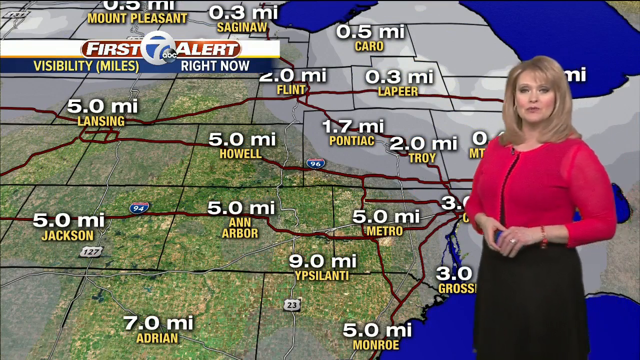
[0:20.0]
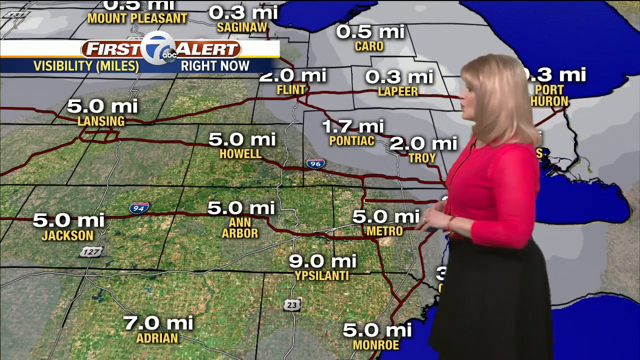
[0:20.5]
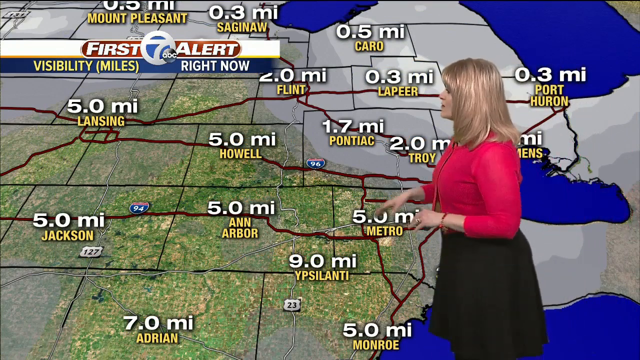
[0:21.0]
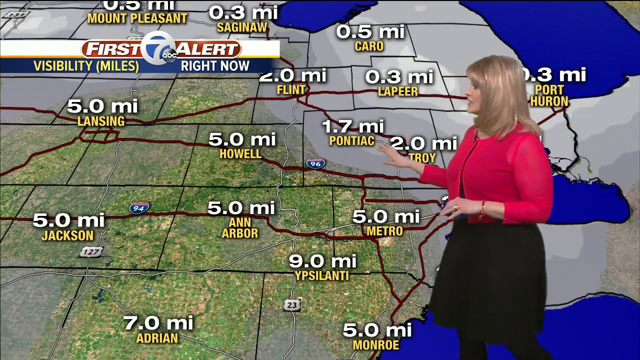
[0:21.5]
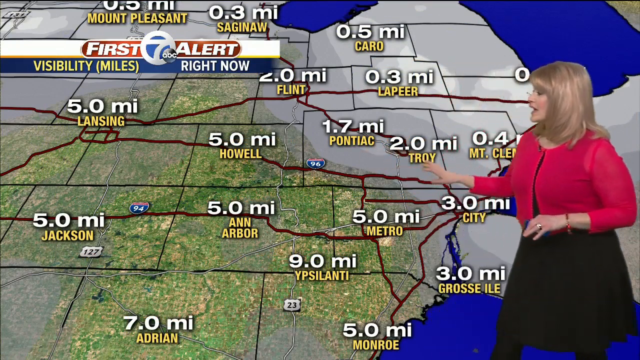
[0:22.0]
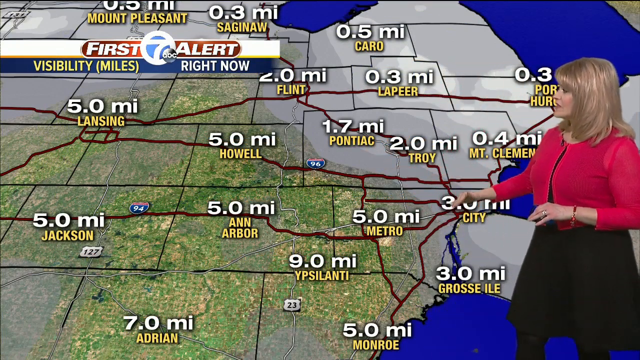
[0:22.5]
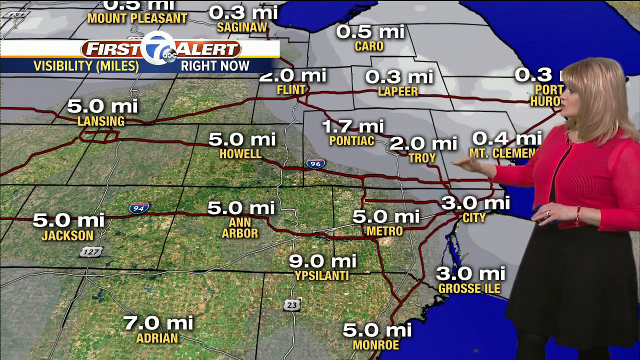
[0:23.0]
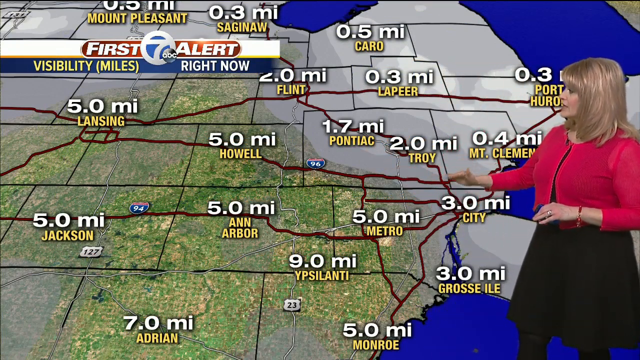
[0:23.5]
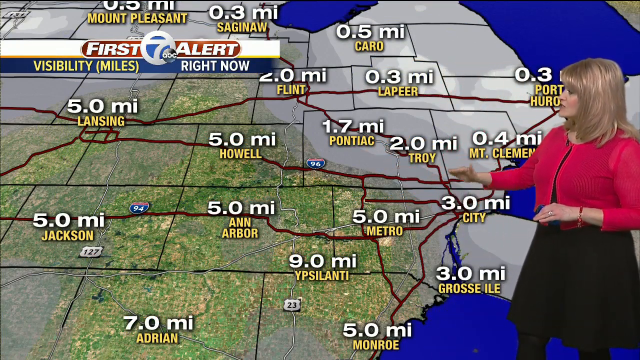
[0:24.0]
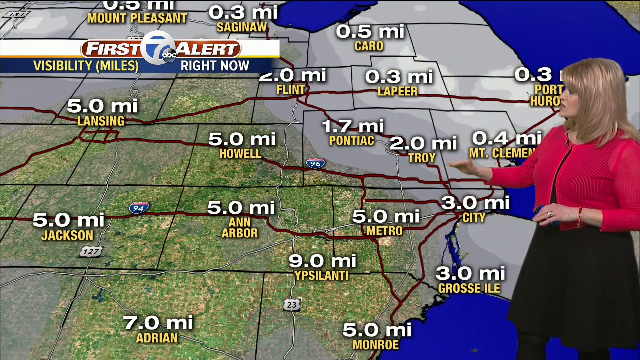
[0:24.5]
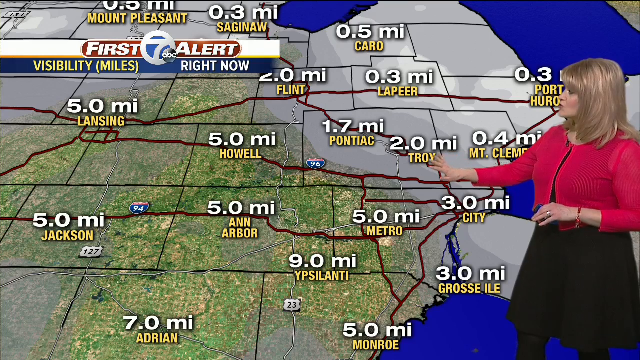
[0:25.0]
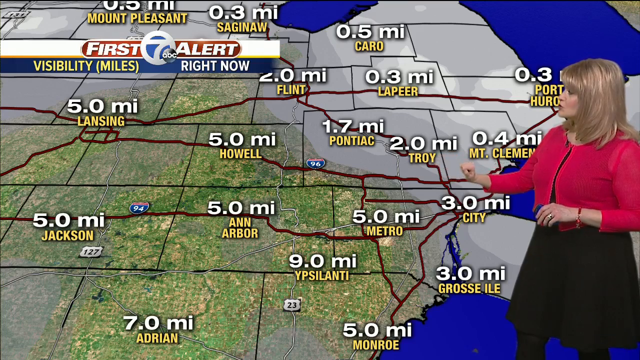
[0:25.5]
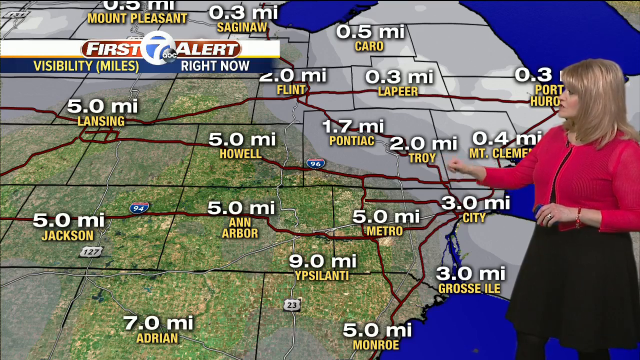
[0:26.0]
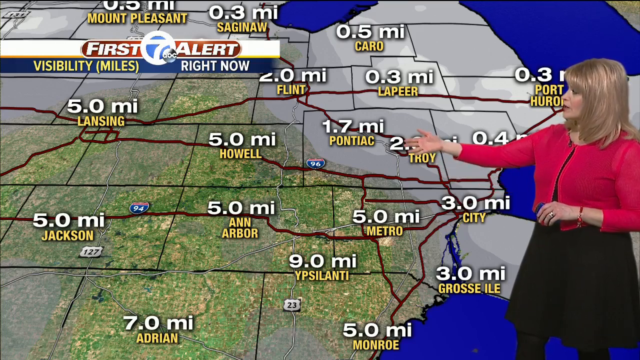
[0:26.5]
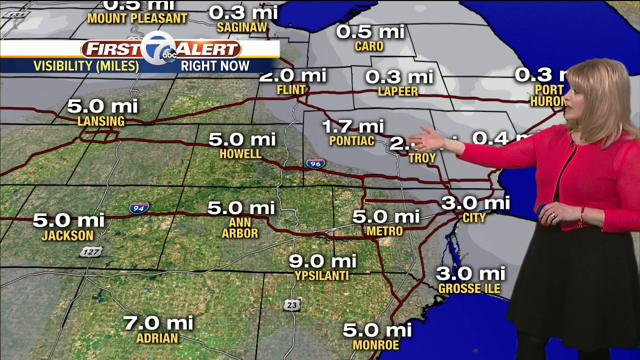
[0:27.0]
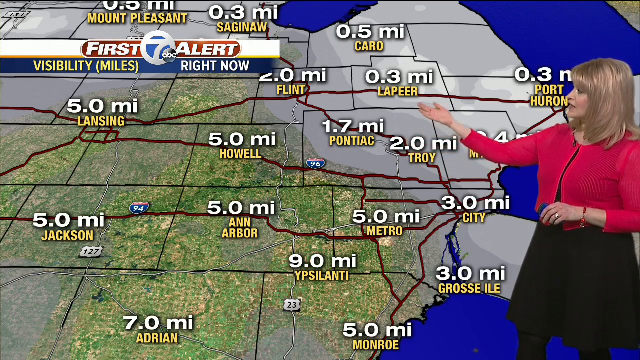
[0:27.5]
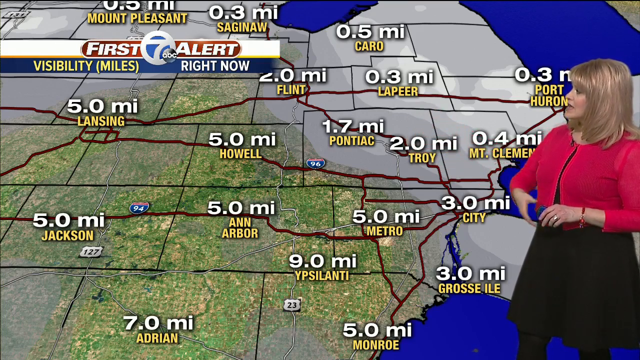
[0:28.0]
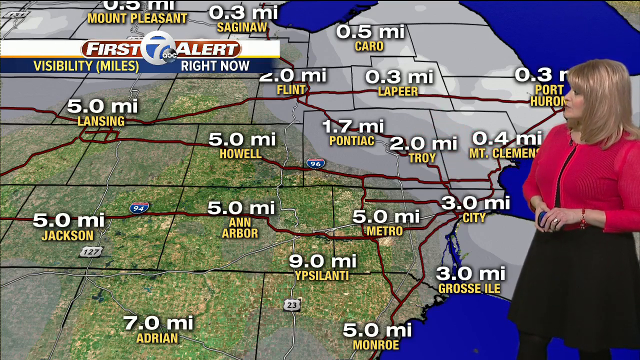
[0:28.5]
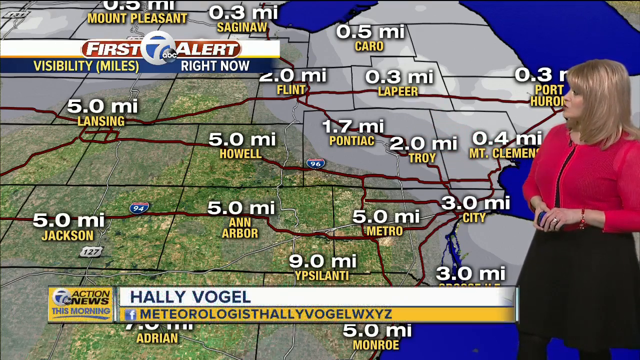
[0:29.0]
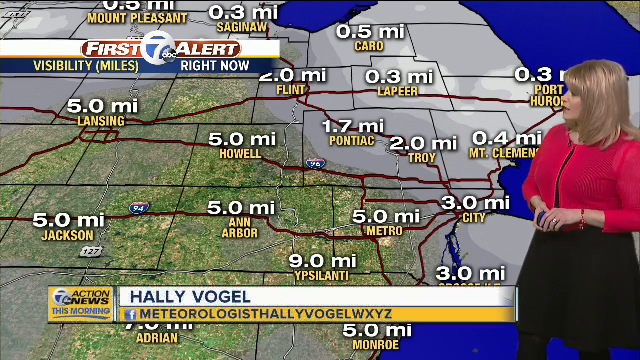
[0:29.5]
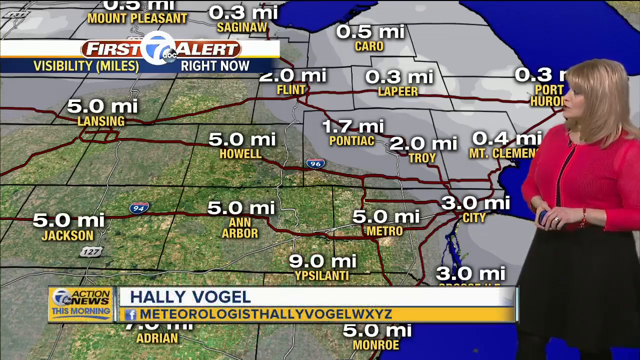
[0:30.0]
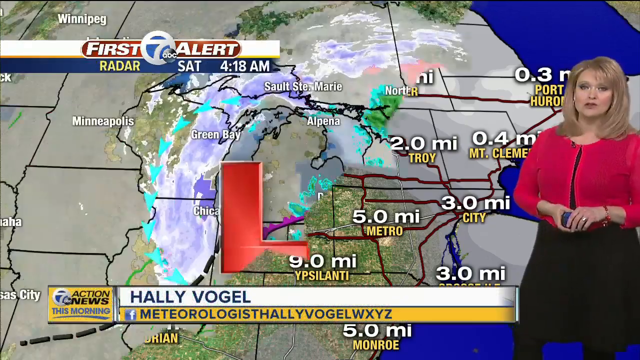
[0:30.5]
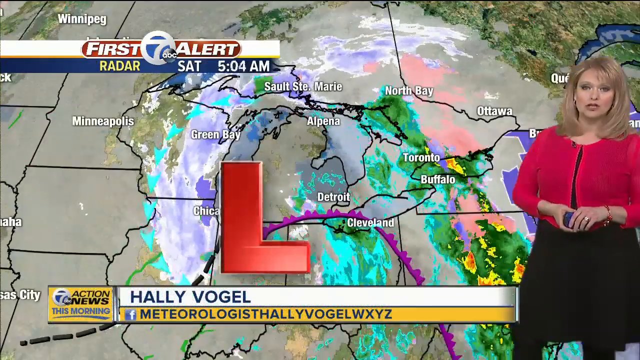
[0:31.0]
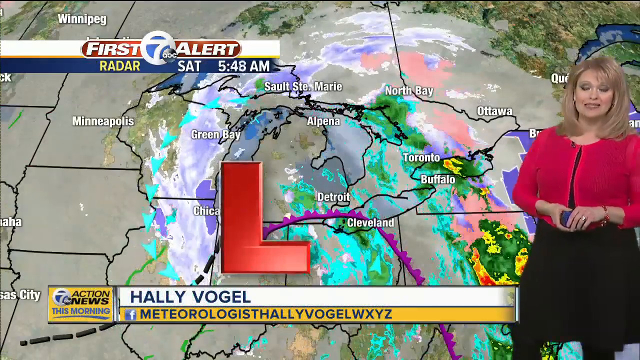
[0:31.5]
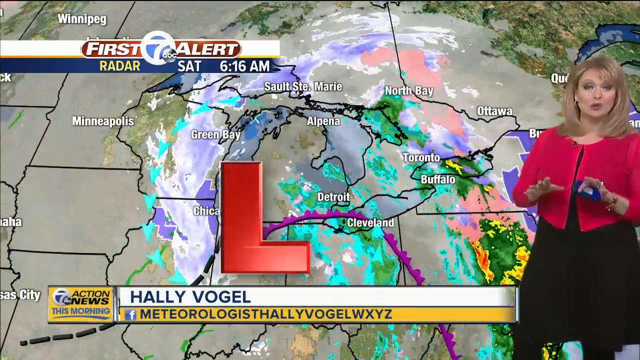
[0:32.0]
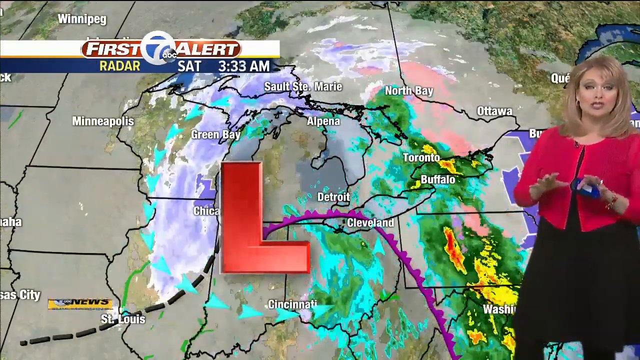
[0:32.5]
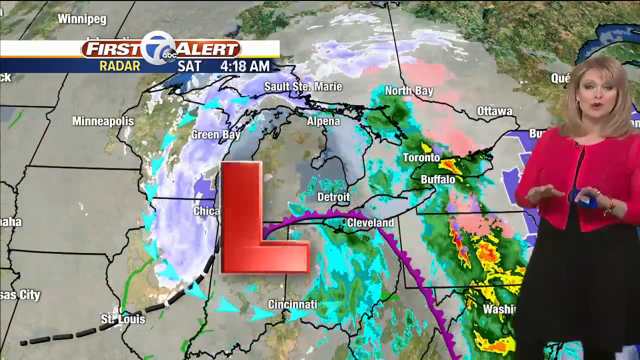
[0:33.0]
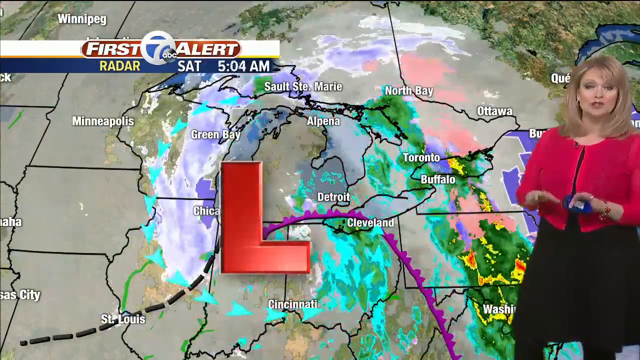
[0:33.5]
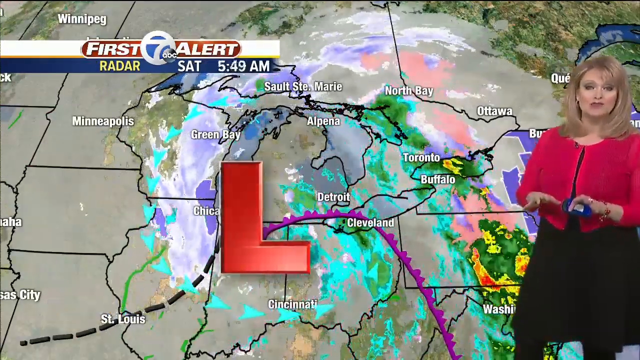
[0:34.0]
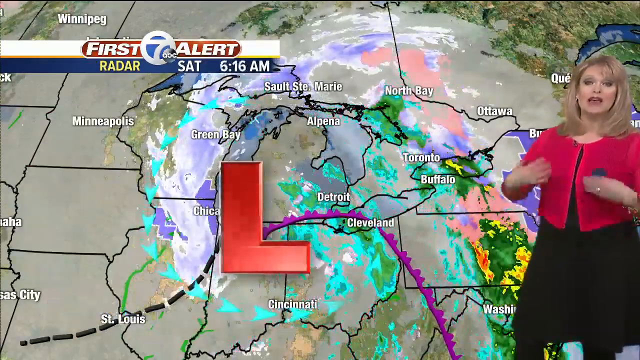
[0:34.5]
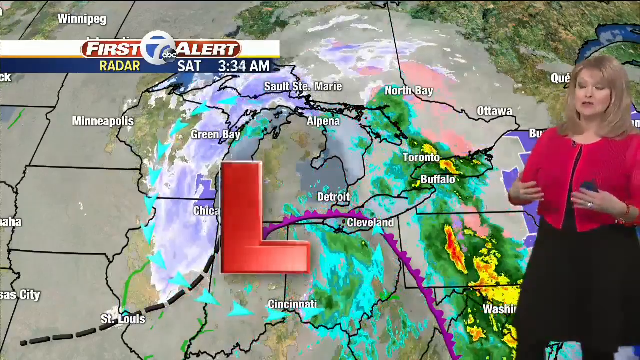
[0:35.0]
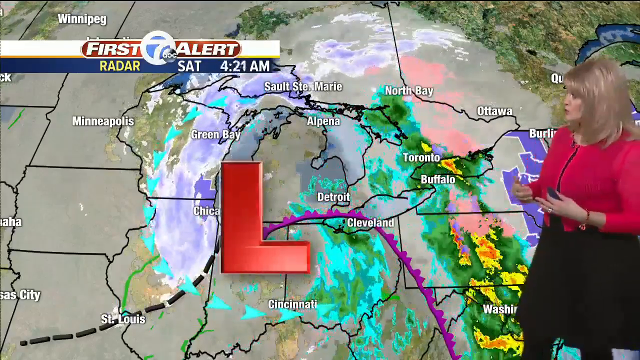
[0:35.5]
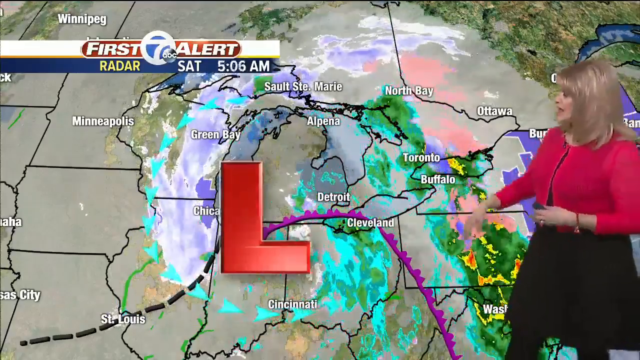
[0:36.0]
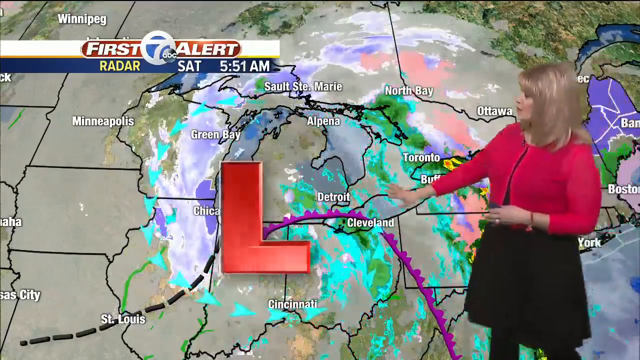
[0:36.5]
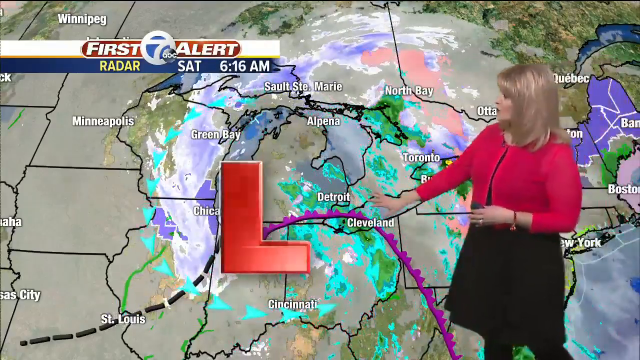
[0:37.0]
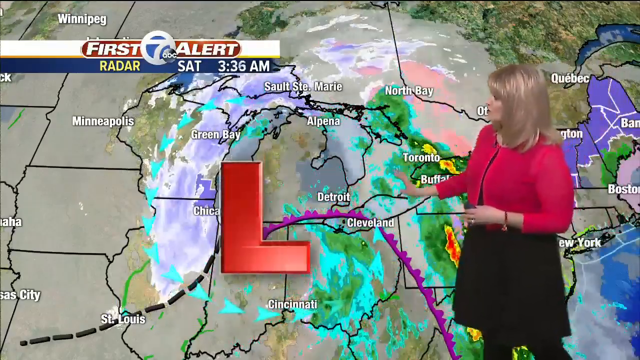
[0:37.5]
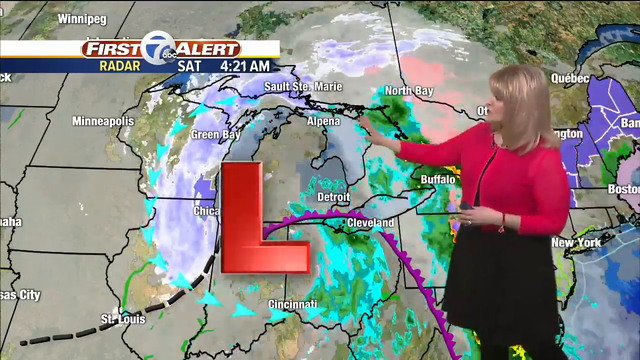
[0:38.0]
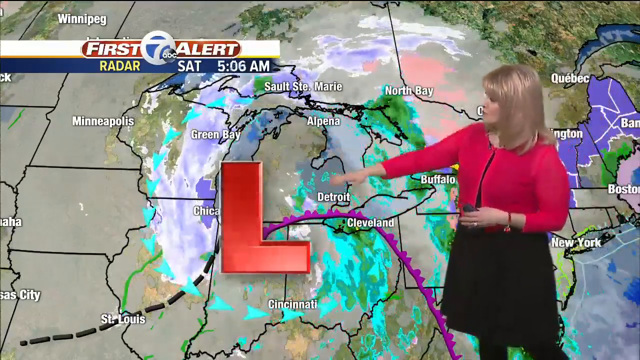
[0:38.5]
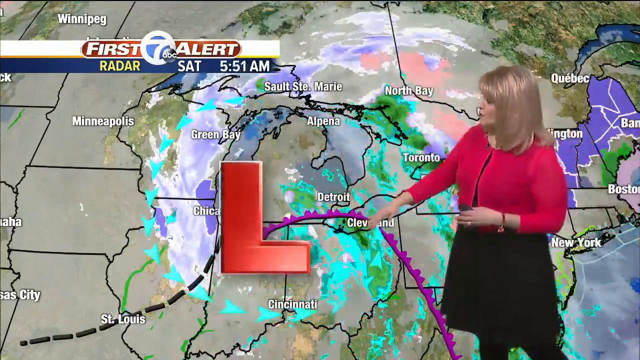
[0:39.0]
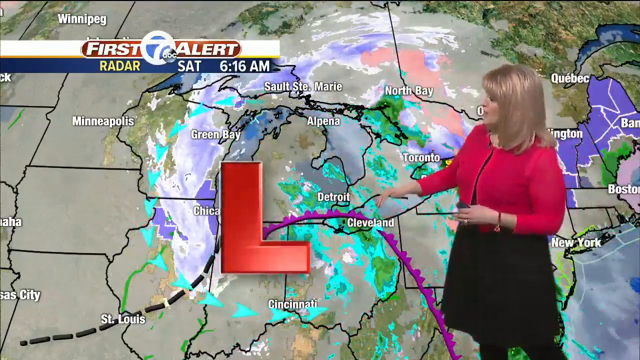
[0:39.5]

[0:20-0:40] The woman, meteorologist Hallie Vogel of the news channel, is in front of a map labeled with areas such as Mount Pleasant, Saginaw, Lansing, Flint, Cairo, Howell, Pontiac, Lapeer, Troy, Metro, Ann Arbor, Jackson and Grosse, among others. The map shows visibility in miles across the state, and she uses her hands to point at certain areas. The view then shows more surrounding states and cities.